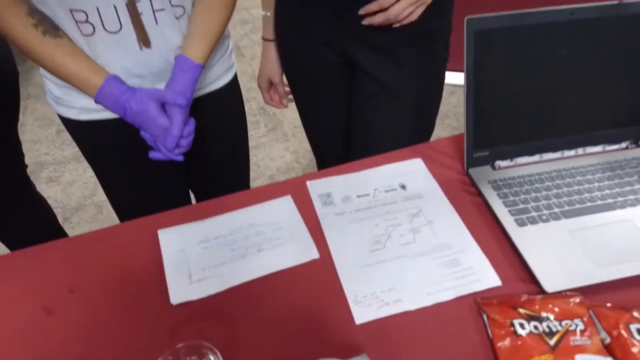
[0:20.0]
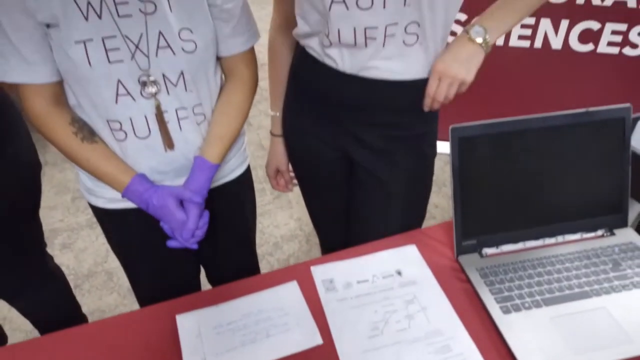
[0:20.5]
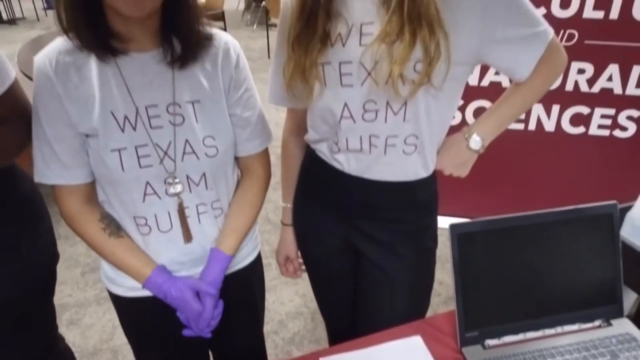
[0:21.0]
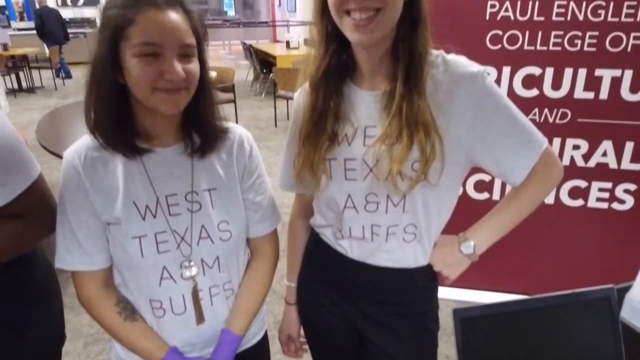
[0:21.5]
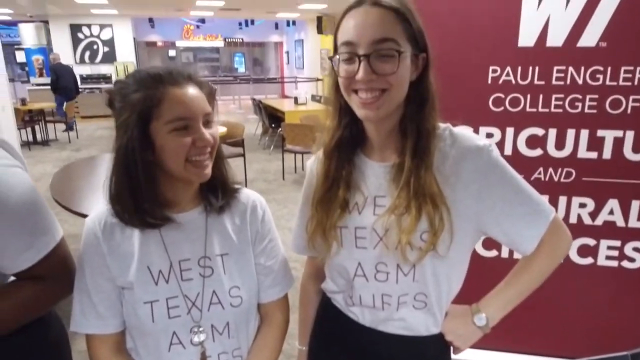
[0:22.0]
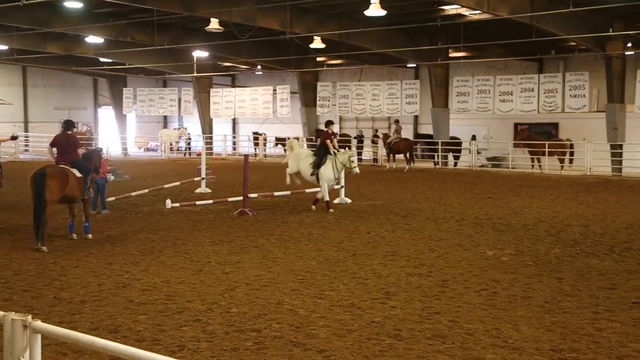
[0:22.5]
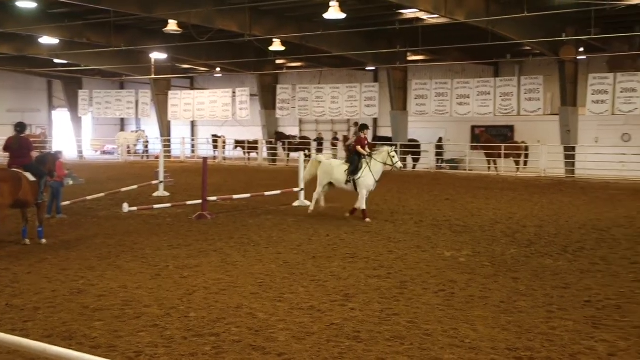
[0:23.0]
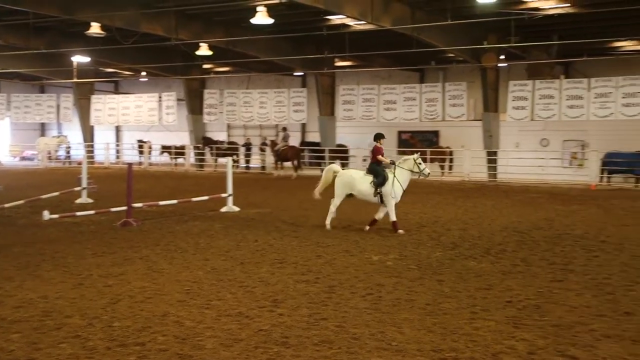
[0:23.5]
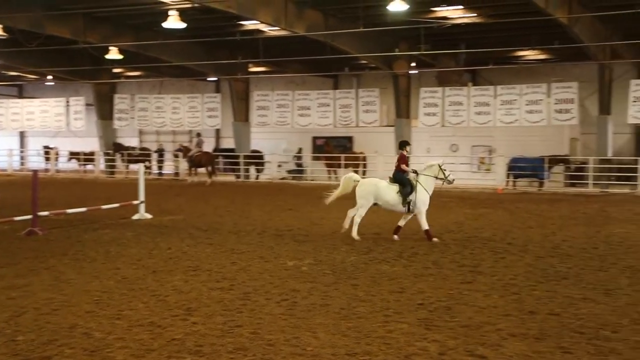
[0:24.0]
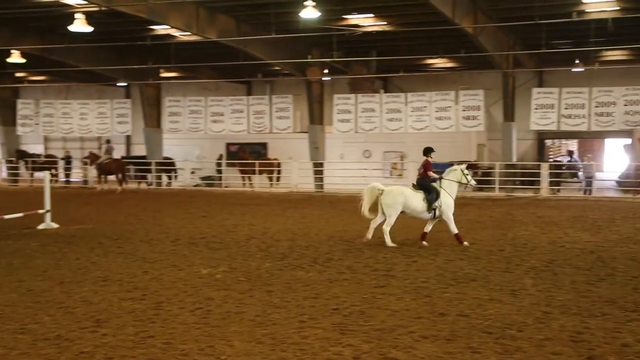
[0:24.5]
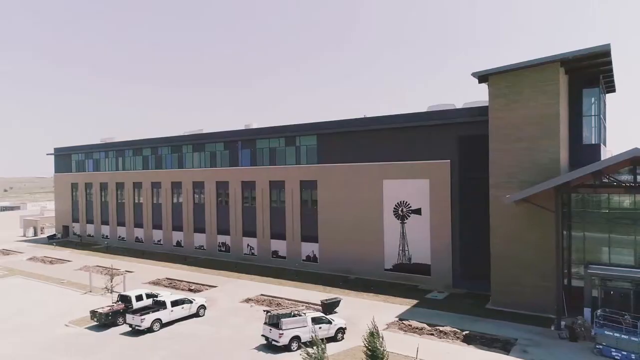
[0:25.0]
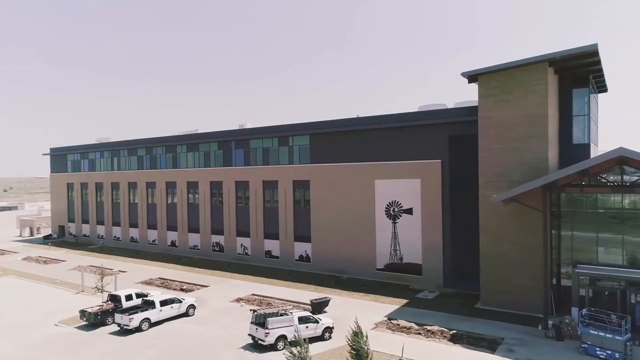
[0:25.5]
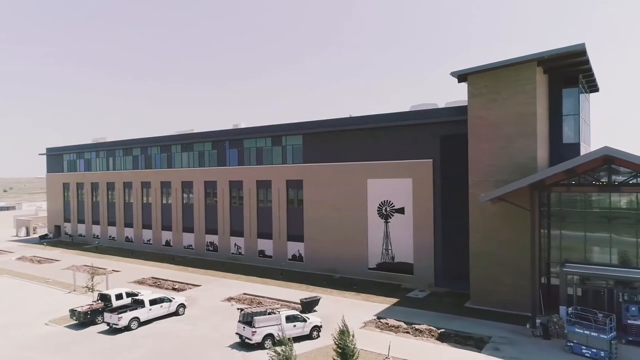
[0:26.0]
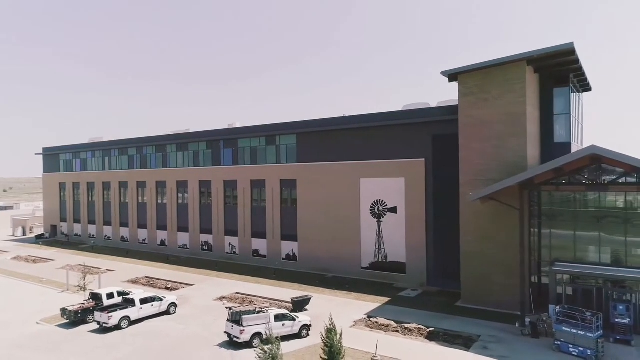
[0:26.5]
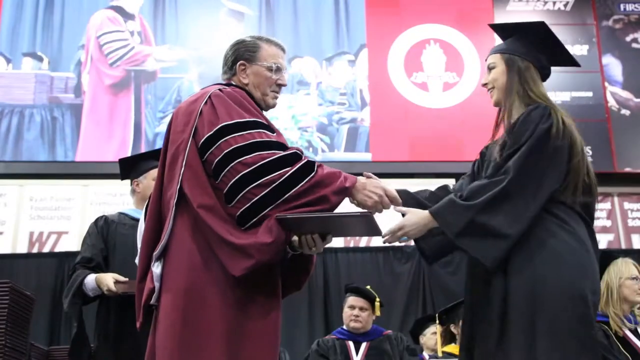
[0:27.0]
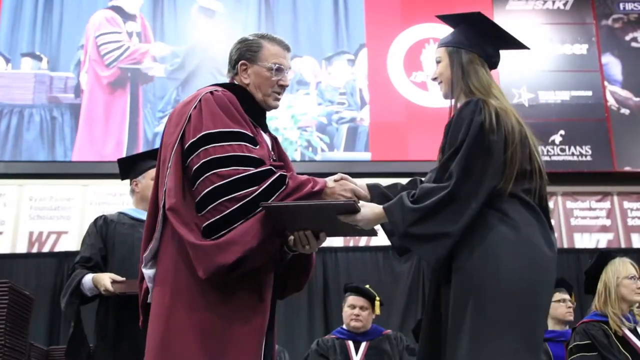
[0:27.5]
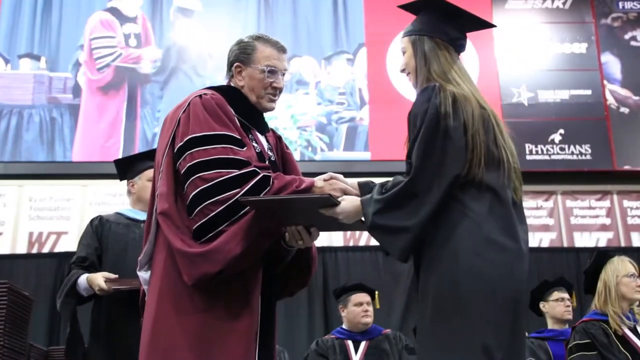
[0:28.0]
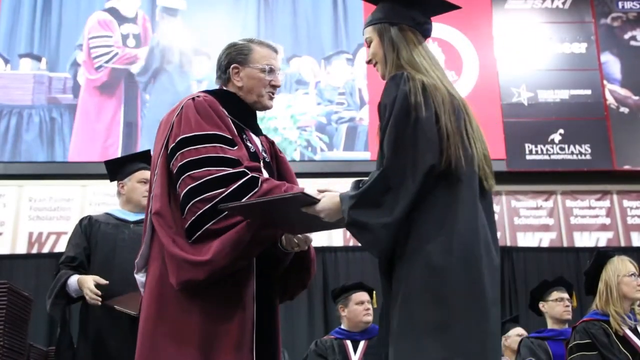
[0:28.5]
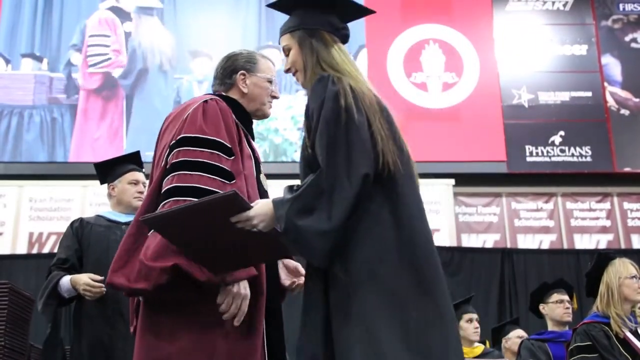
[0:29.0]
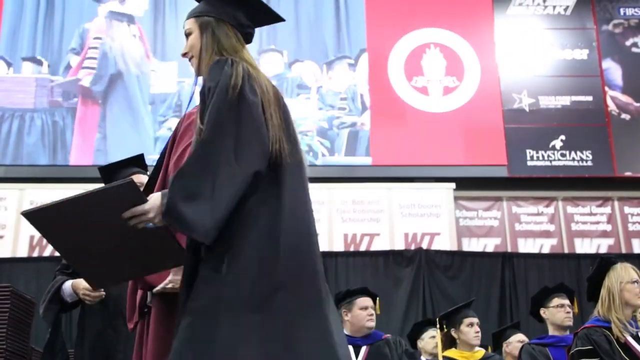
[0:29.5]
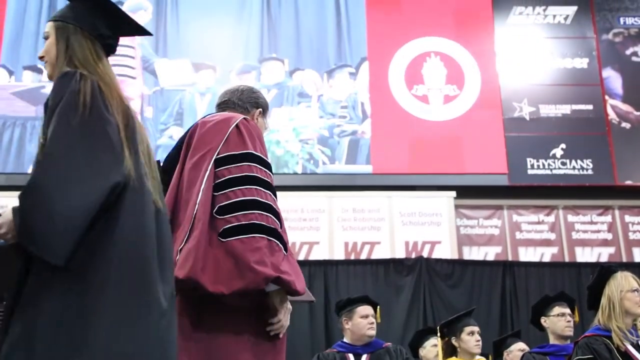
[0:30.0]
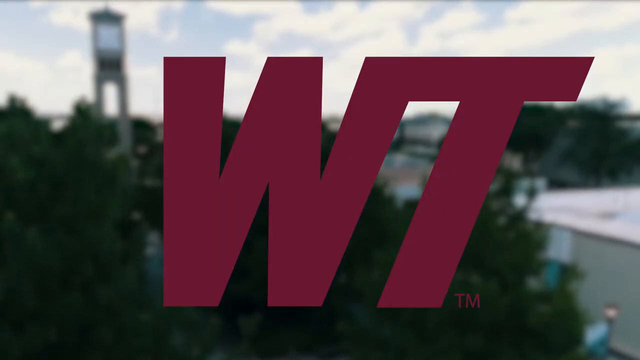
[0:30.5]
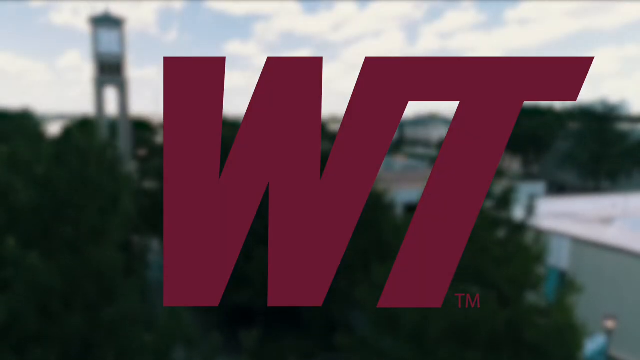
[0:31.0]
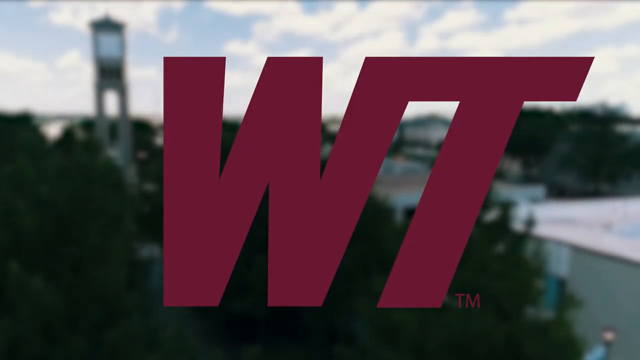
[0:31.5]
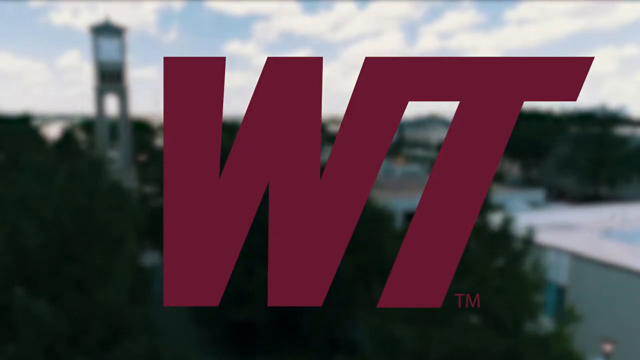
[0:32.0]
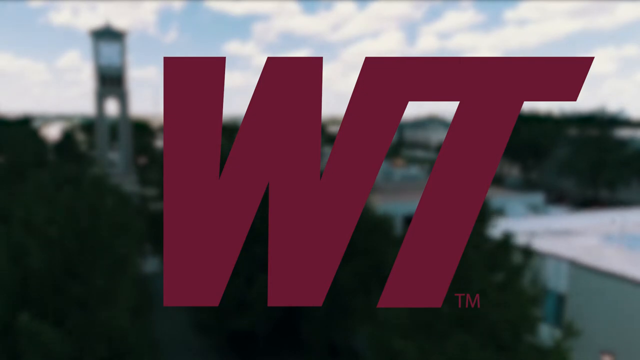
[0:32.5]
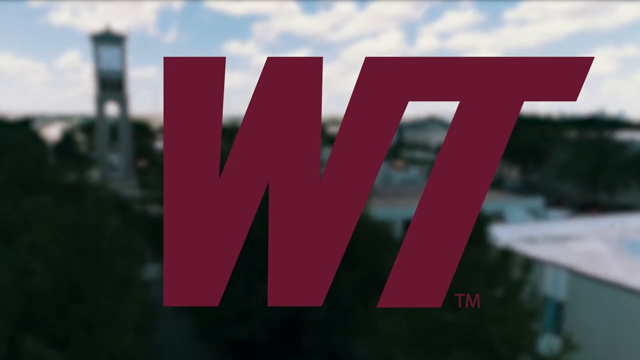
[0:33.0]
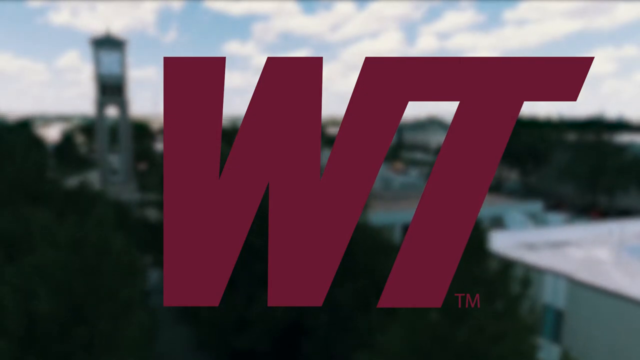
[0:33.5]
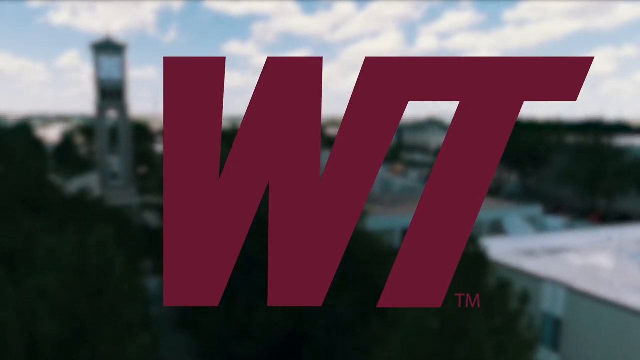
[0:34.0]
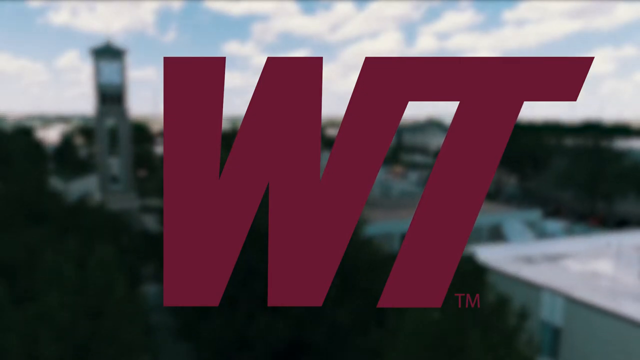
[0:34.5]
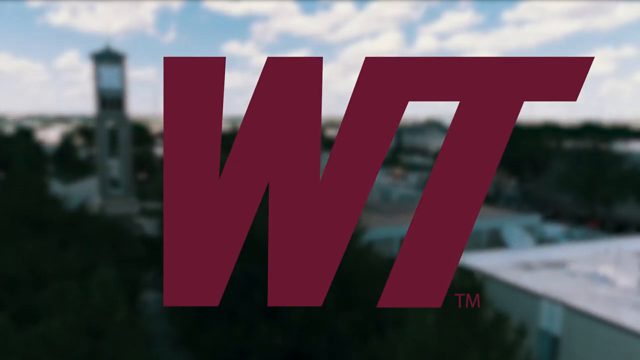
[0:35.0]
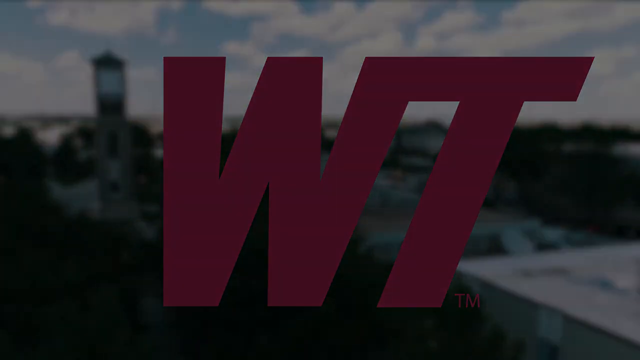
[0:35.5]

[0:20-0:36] As the camera rises, two girls wearing t-shirts that say "West Texas A&M Buffs" come into view. A third girl is off the left side of the screen and can't quite be seen. The video cuts to an equestrian scene of someone riding a miniature horse in an indoor riding facility. Next comes a cut to the exterior of a building that appears to be quite large, with a two-story mural of a rural windmill on part of its wall. A rapid cut shows a graduation ceremony, where someone, possibly the dean or president, wearing a maroon robe with four stripes on the side, hands a diploma to a happy, smiling student. The young woman is Caucasian with long brunette hair down to her back or shoulders and wears a black cap and gown. Finally, maroon letters forming the logo appear over a blurred aerial shot of the campus on a partially cloudy but sunny day. The maroon letters are in block form and lean to the right, and the logo appears to rise upward.